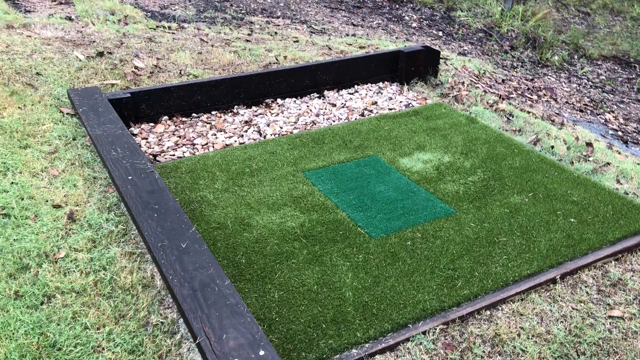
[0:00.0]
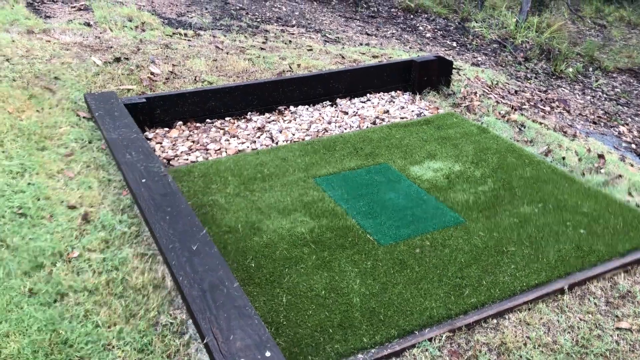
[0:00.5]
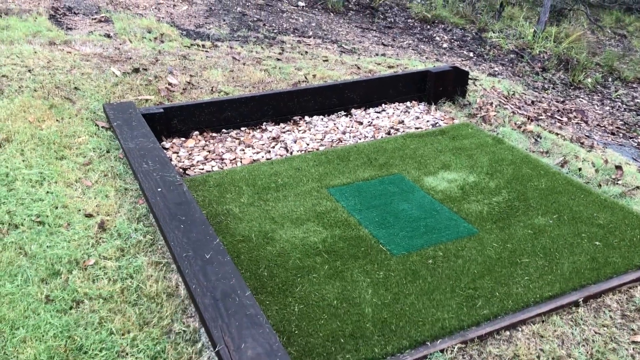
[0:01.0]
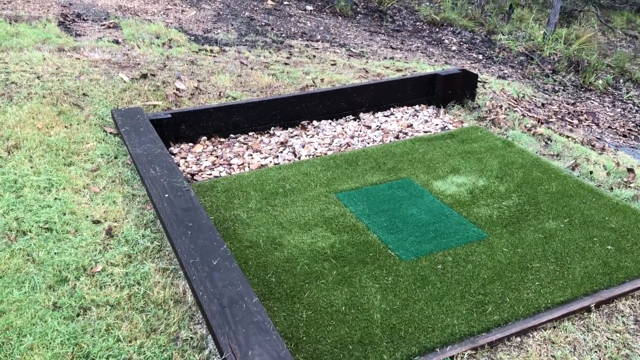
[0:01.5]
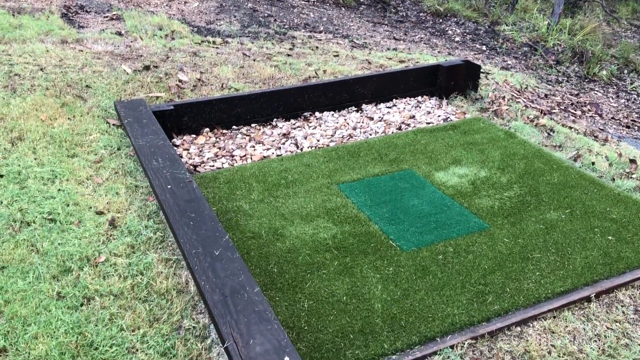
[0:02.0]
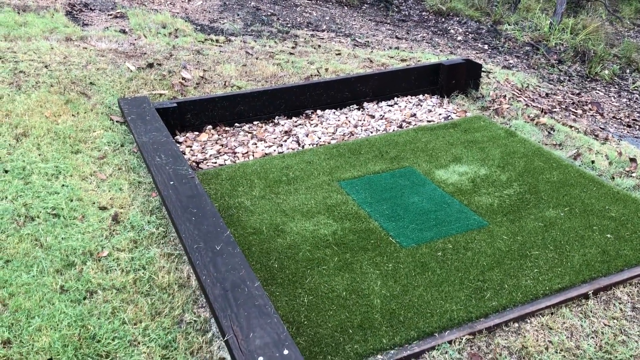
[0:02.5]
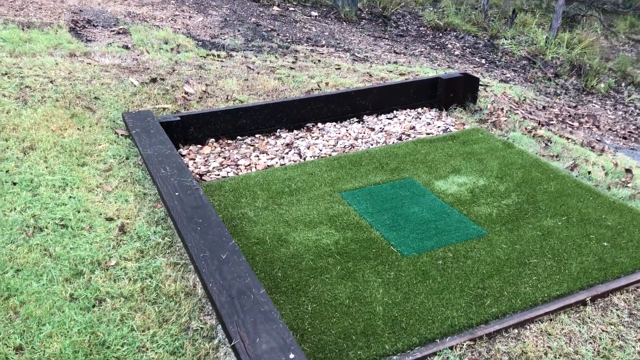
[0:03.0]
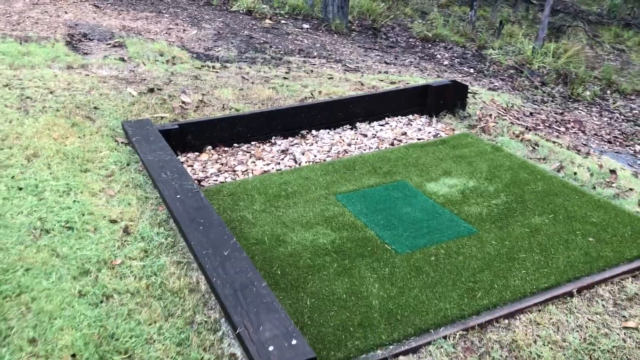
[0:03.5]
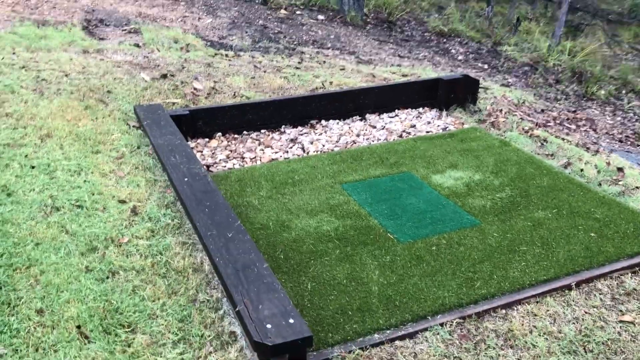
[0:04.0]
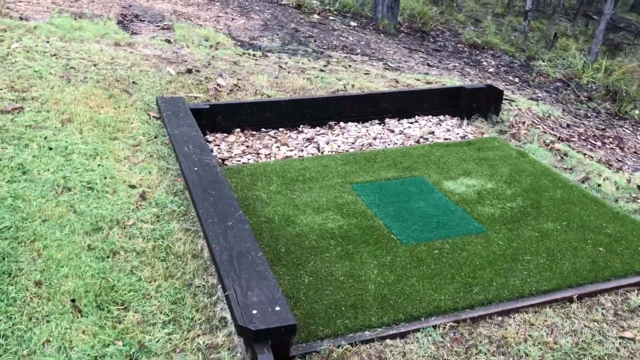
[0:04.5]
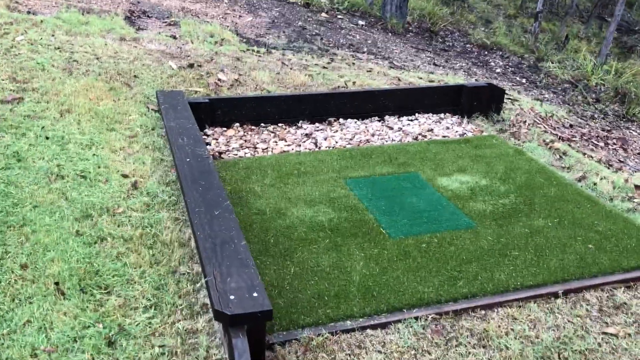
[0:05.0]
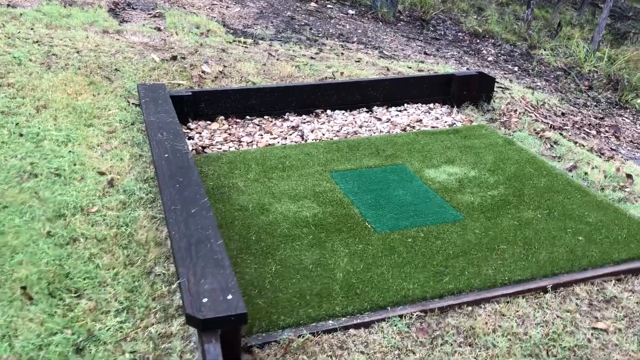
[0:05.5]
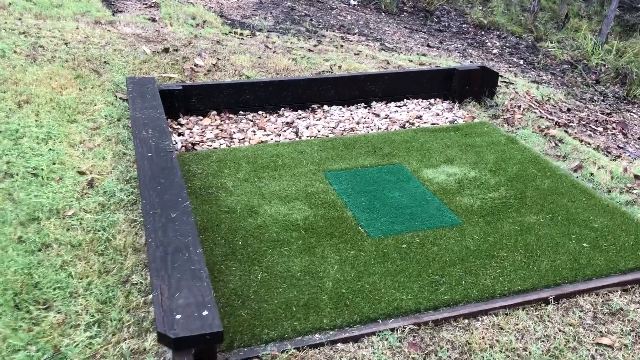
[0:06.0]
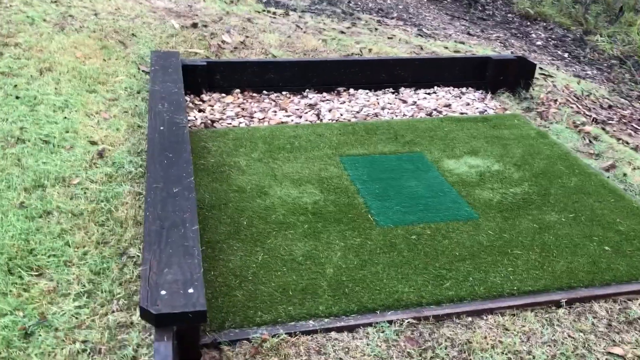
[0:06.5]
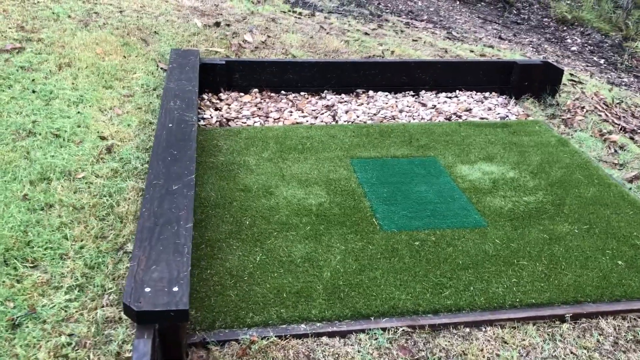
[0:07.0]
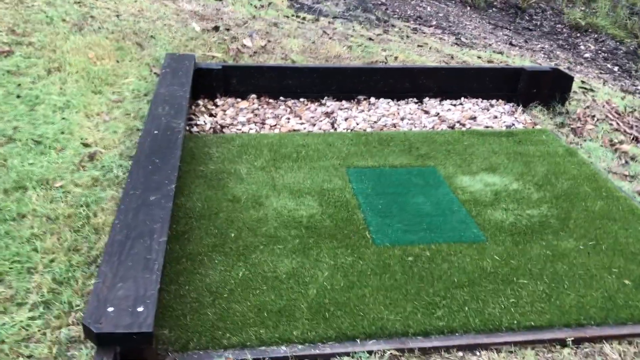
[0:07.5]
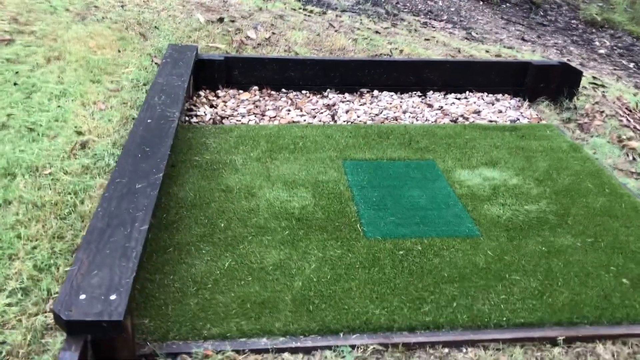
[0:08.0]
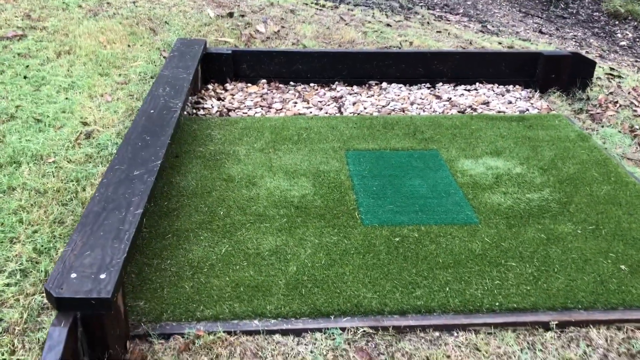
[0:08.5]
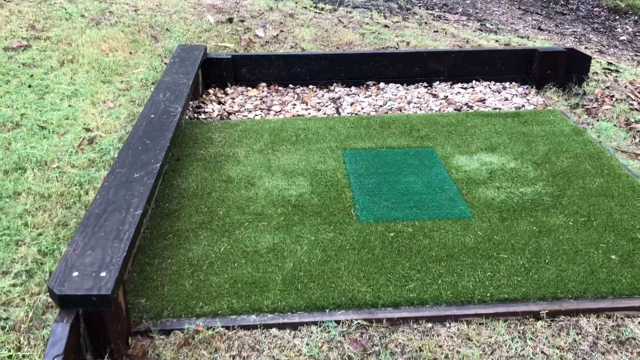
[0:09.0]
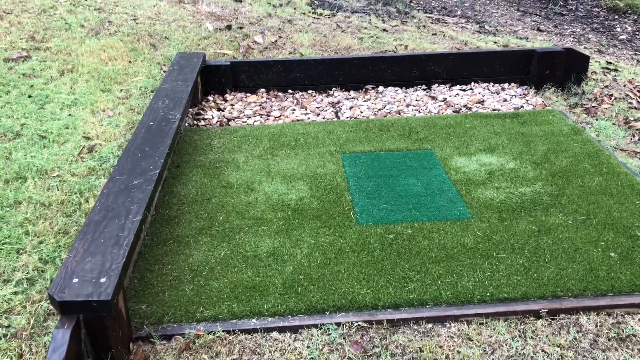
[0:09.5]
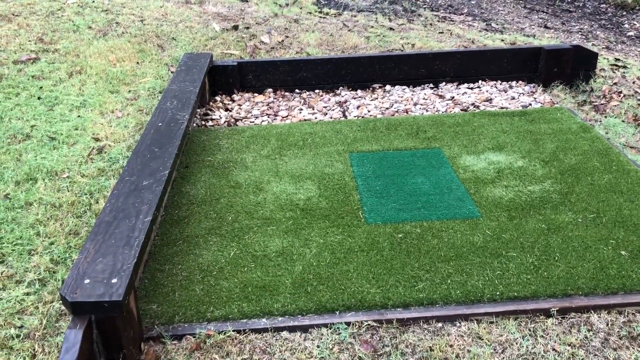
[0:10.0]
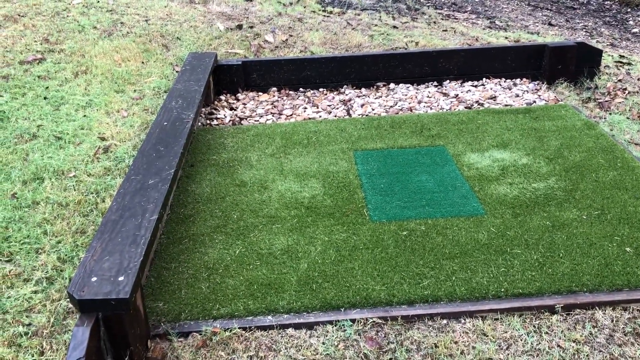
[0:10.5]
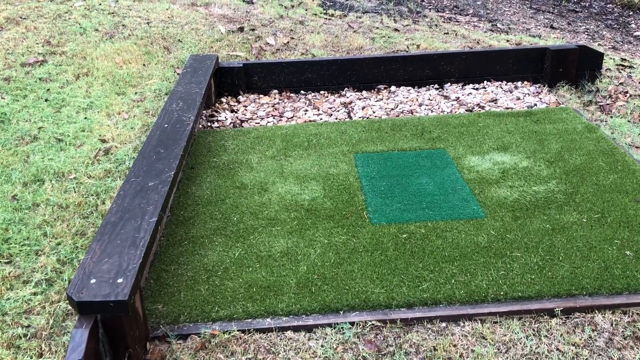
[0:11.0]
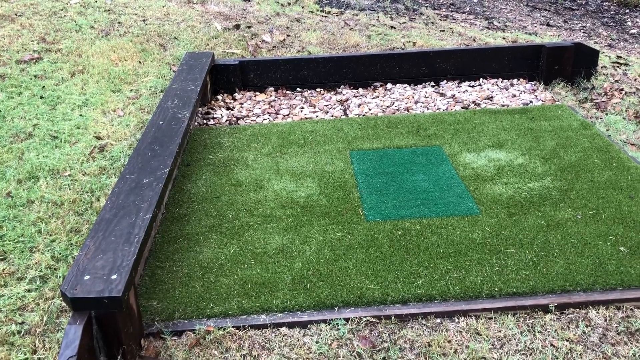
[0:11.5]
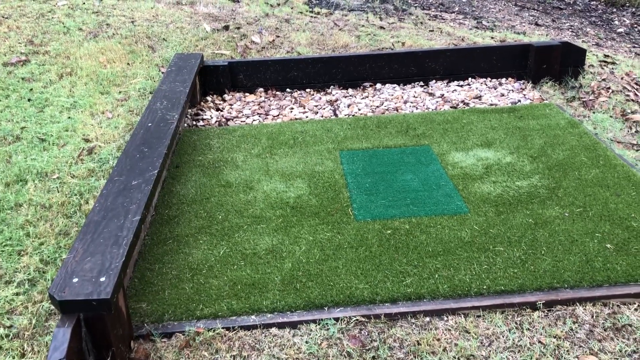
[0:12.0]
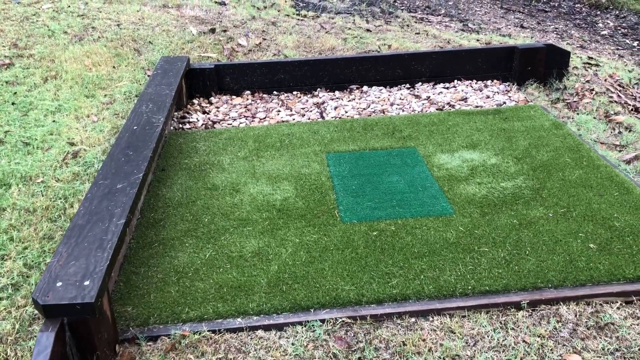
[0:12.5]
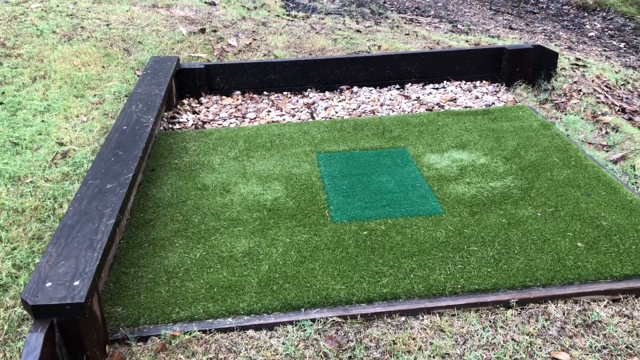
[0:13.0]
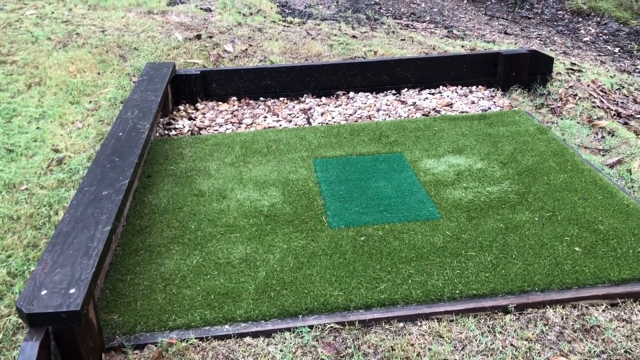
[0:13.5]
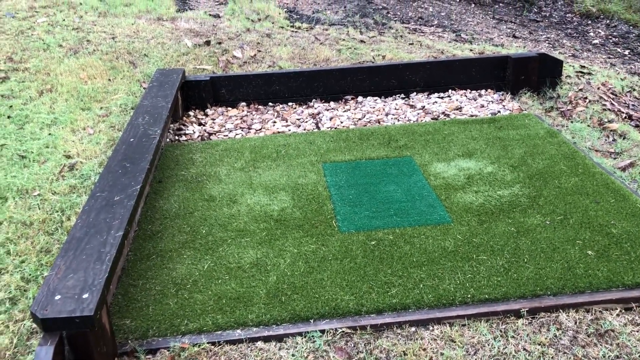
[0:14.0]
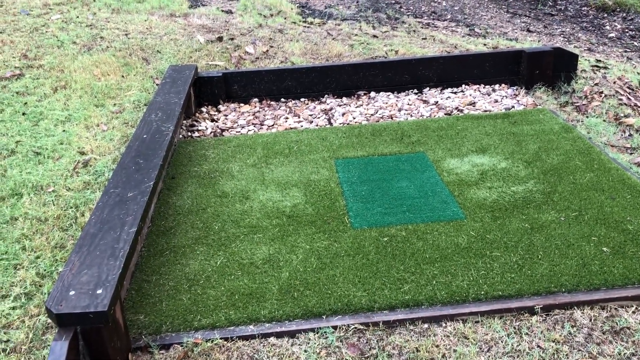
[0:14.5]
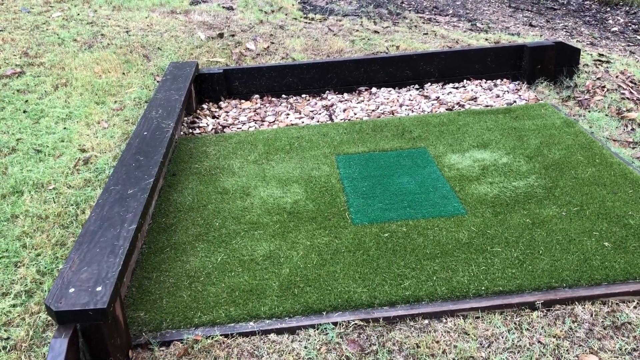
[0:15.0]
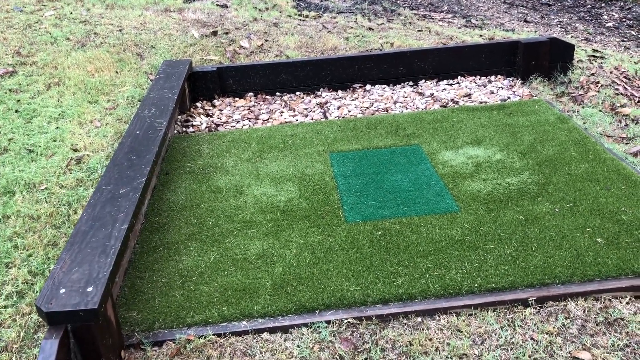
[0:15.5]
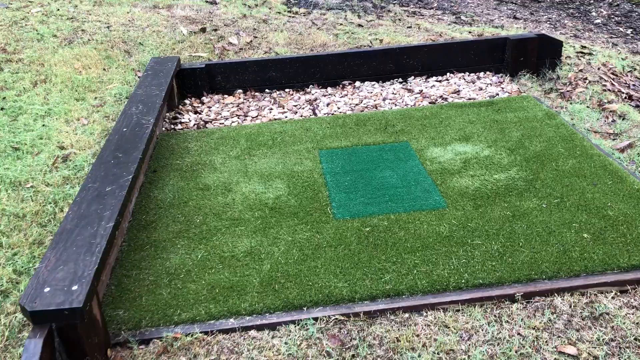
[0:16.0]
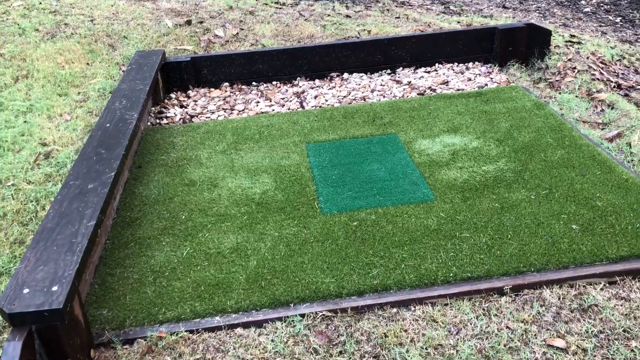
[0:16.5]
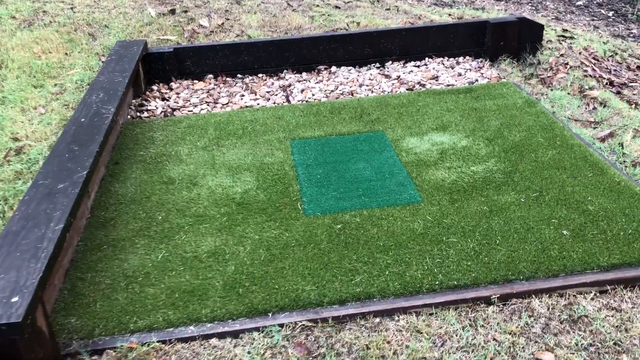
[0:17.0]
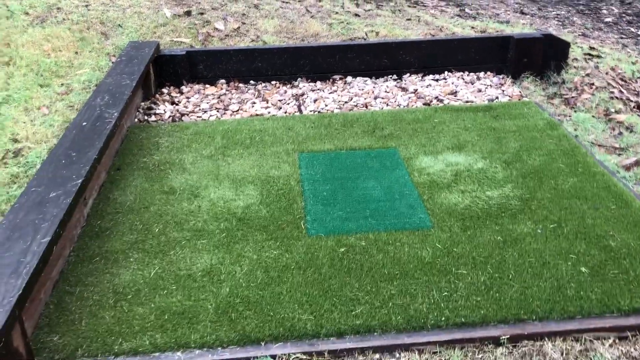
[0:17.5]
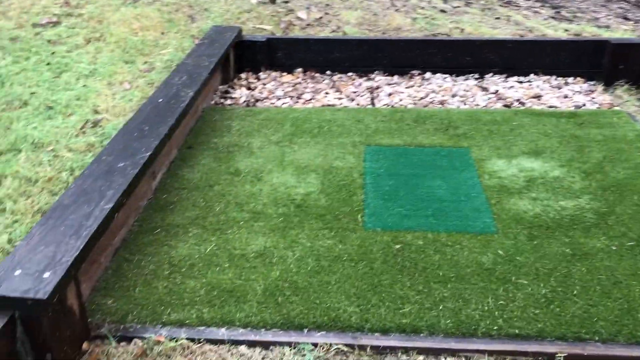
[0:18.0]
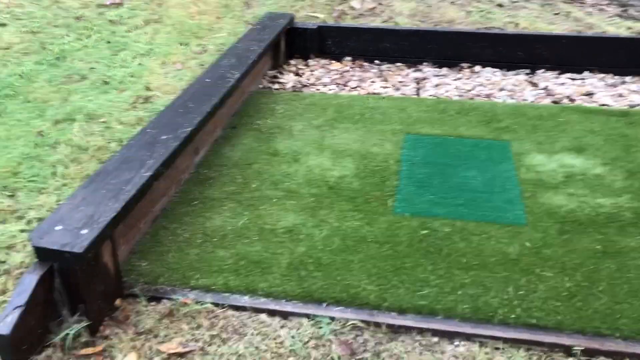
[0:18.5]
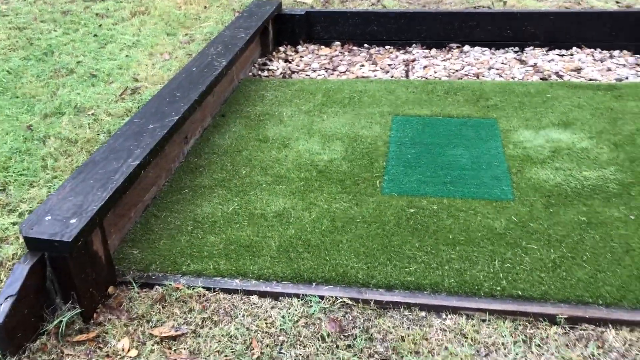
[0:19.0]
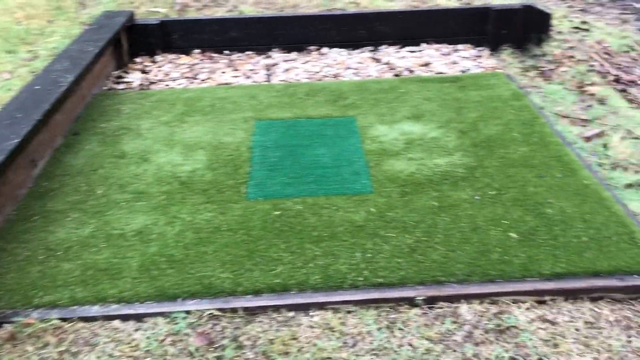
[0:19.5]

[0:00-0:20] The video opens outdoors on a green astroturf carpet, surrounded by rocks on the upper left side and behind it, with grass. In the very middle there is a dark green spot that is less shaggy, and in front of it is a wooden part that is black, with its side the same. Light grass is in front of and beside it. This is a place to tee off for golf. The rocks behind it look smooth and gray. To the right there is some grass and some debris. The wooden structure on the left side is made of a one-by-two top painted black, and the right side is also made of a one-by-two top painted black.